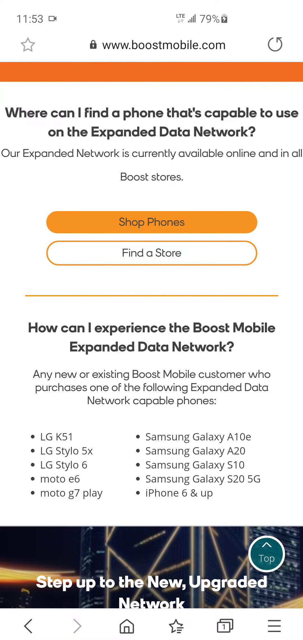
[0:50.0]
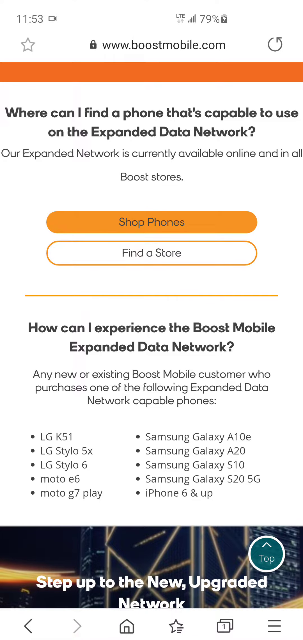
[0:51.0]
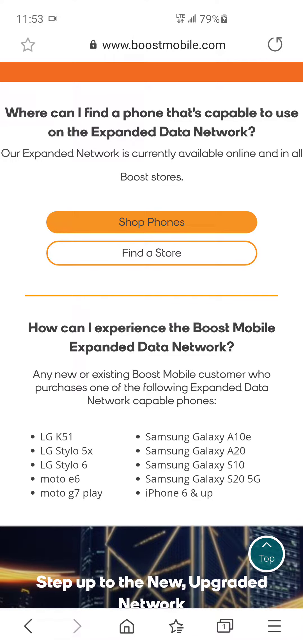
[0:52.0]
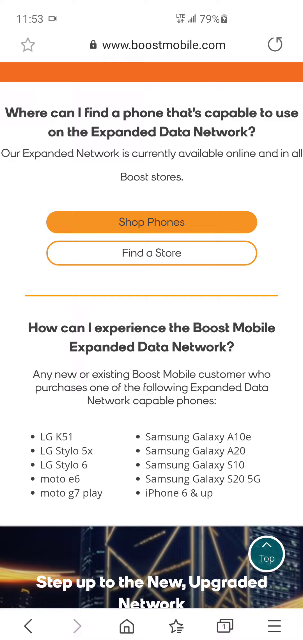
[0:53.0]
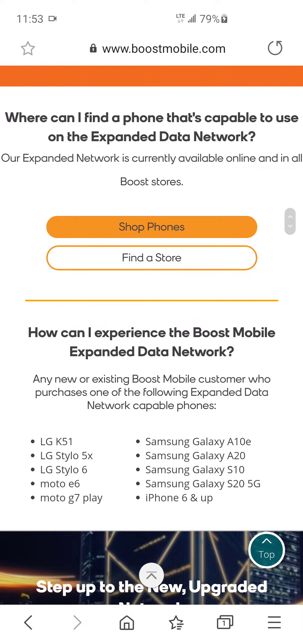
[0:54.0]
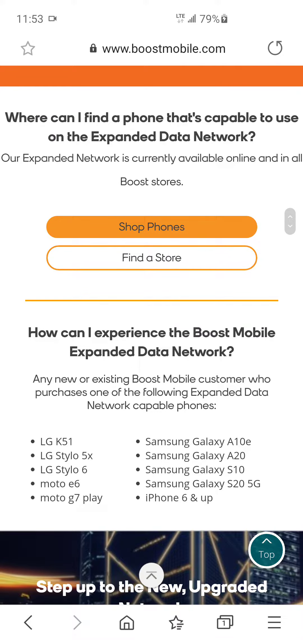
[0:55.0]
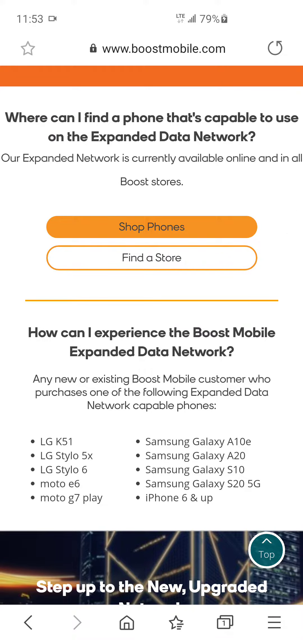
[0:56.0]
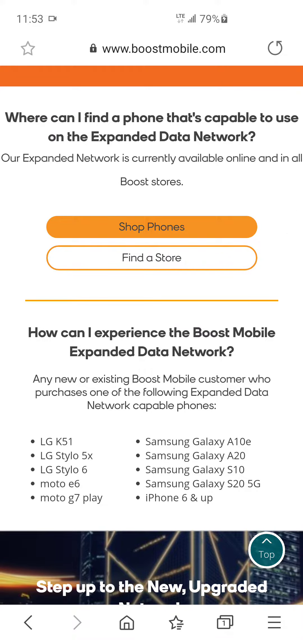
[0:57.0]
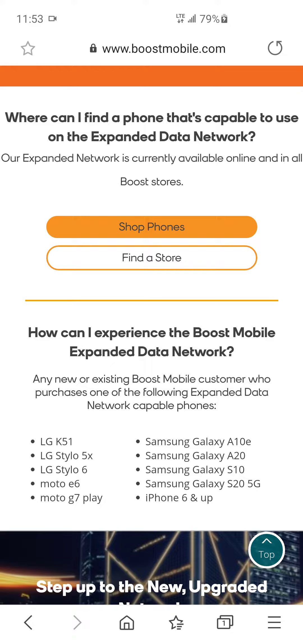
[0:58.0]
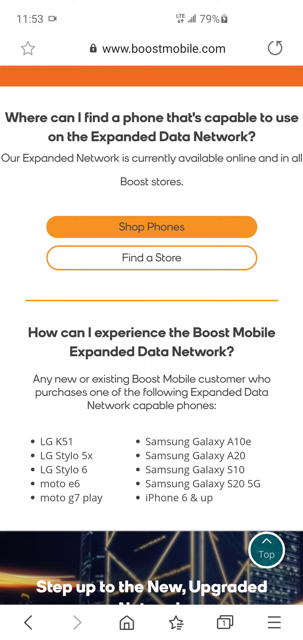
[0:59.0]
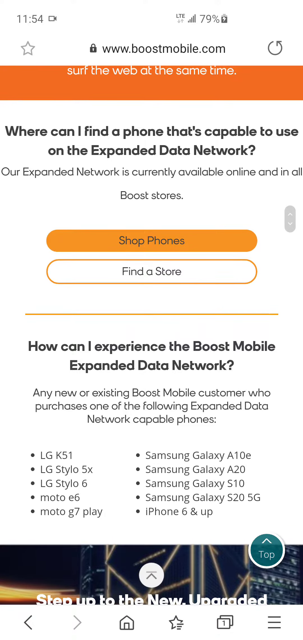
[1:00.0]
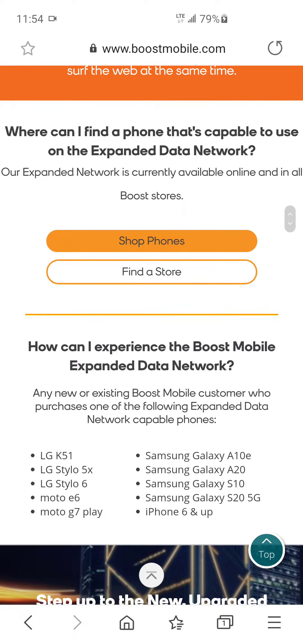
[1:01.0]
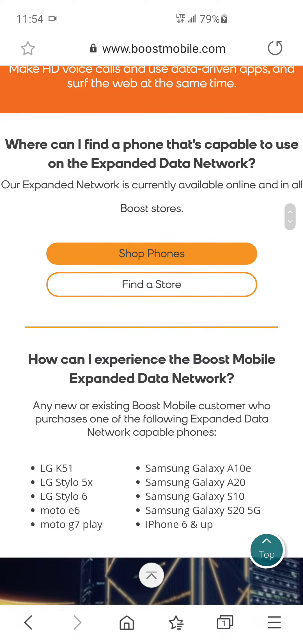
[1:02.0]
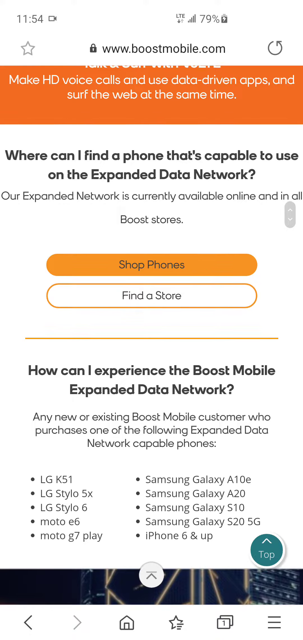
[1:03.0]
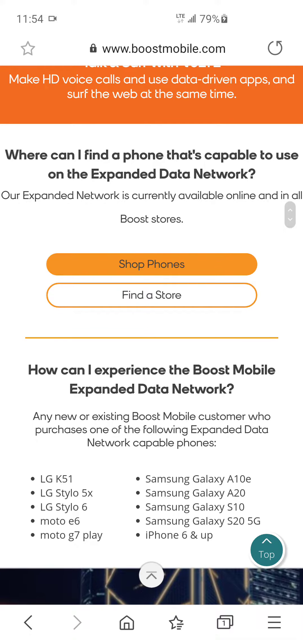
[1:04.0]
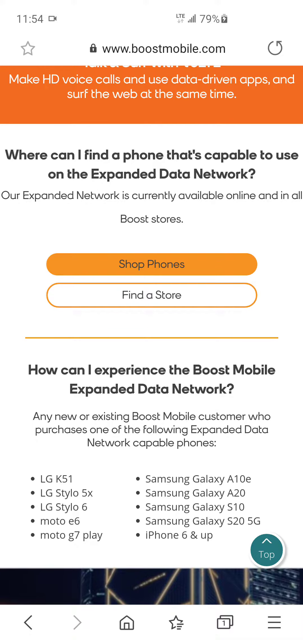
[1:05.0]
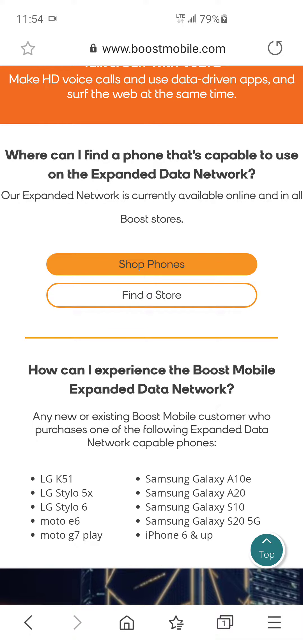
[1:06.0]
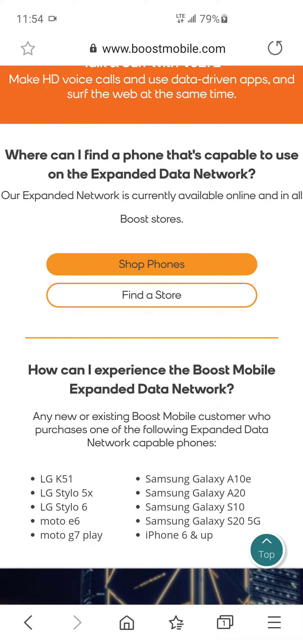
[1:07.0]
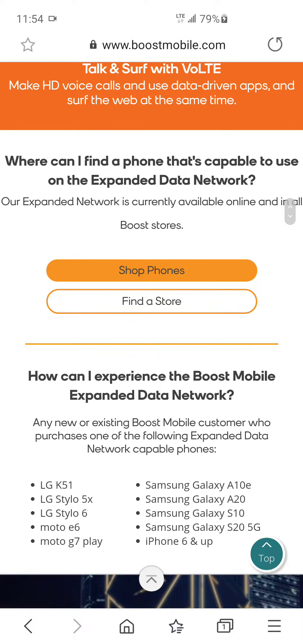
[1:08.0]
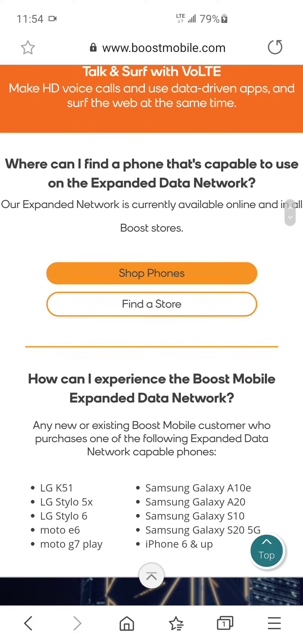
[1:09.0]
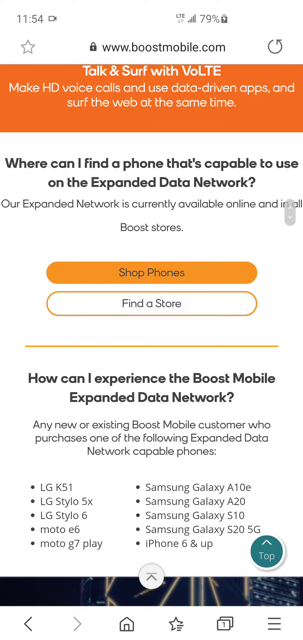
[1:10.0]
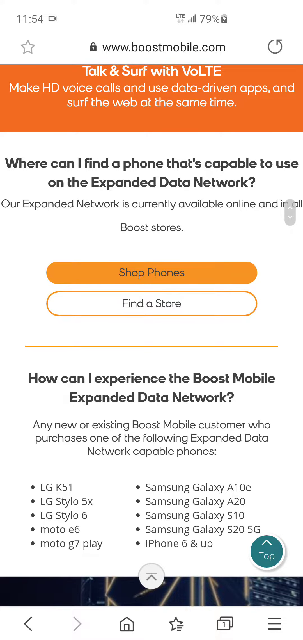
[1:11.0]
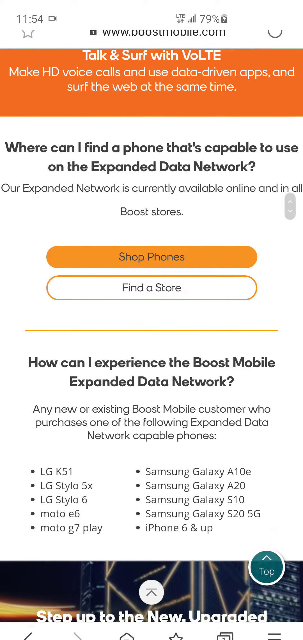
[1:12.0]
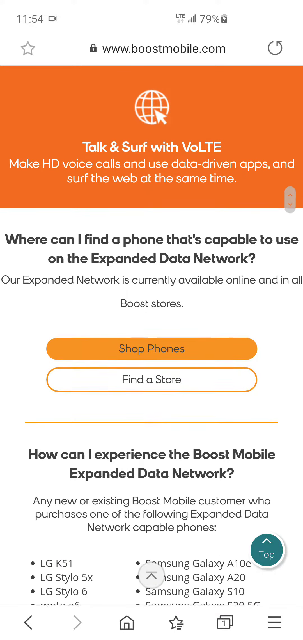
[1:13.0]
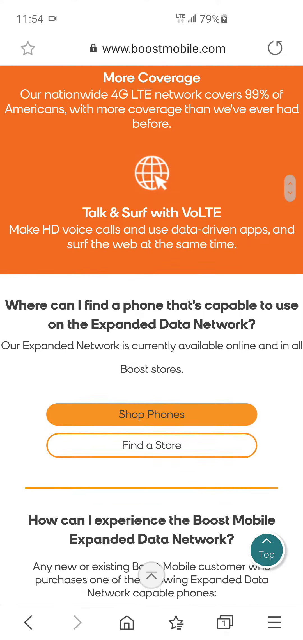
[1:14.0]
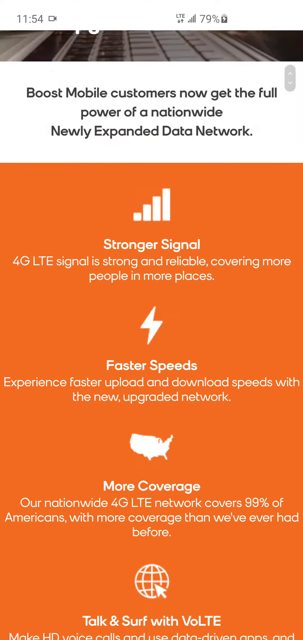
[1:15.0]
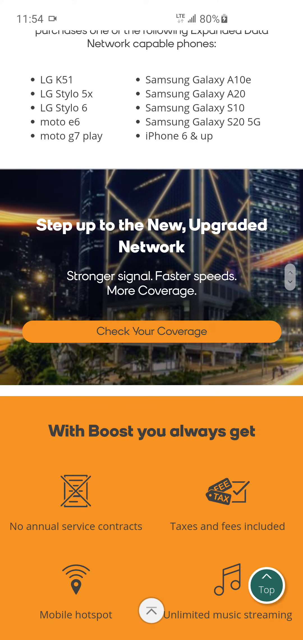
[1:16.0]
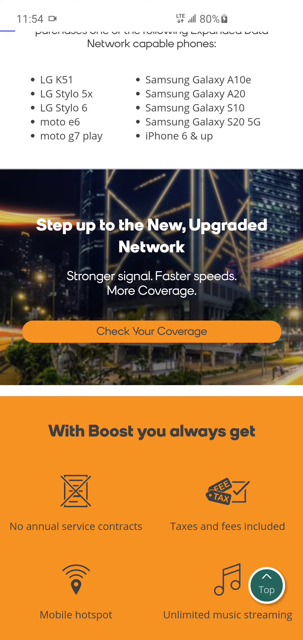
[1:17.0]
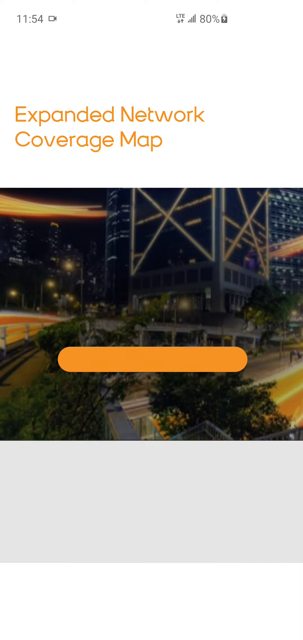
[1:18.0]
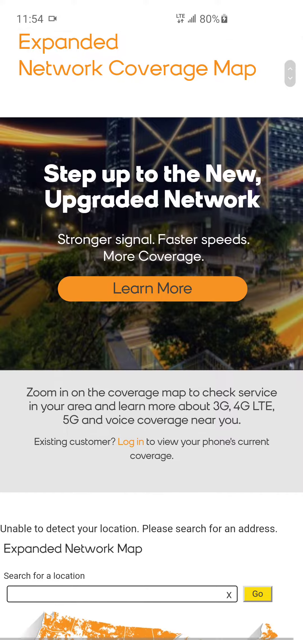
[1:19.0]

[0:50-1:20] The BoostMobile.com mobile website is still shown on the phone. At the top, text reads "where can I find the phone that's capable to use on the expanded data network. Our expanded data network is currently available online and in all Boost stores." There are buttons for "shop phone" and "find a store". The screen stays on this Boost information while it is moved slowly up and down. A part of the screen with an orange background shows "more coverage" written in white, along with the text "Our nationwide 4G LTE network covers 99% of Americans, which means with more coverage than we've ever had before. Talk and surf with VoLTE, make HD voice calls and use data-driven apps and surf the web at the same time." The person scrolls up and down, apparently looking at the various information.